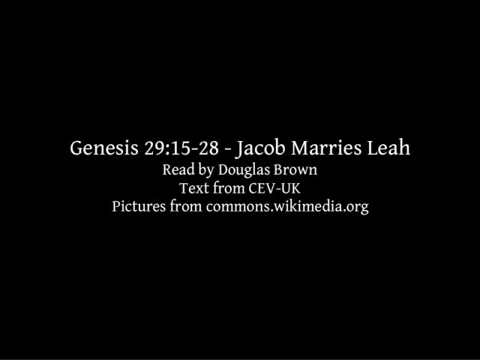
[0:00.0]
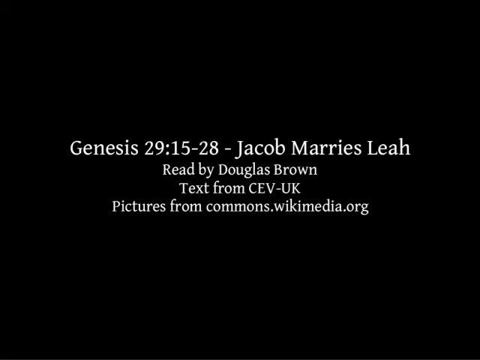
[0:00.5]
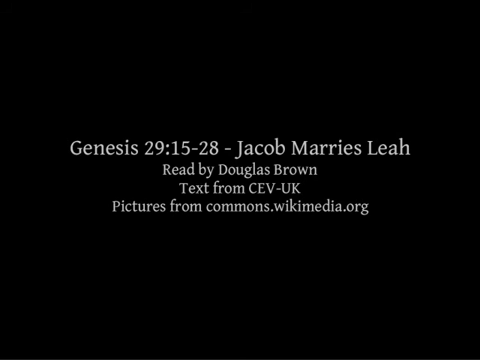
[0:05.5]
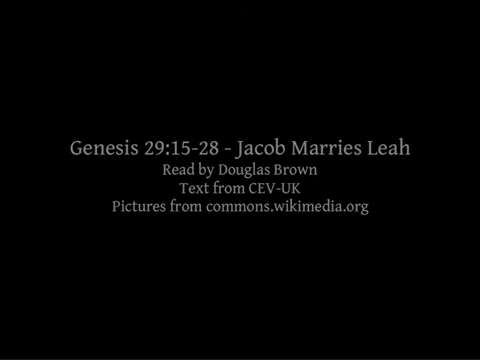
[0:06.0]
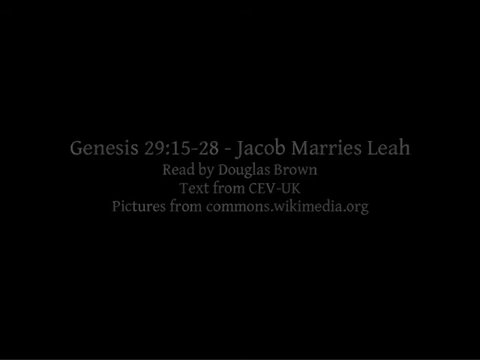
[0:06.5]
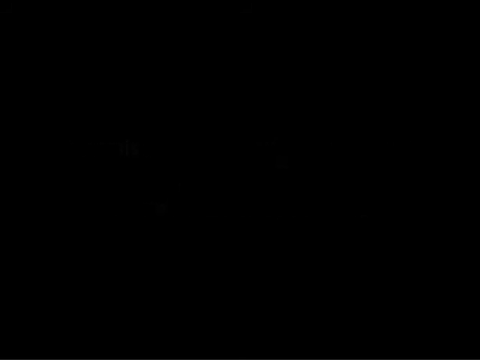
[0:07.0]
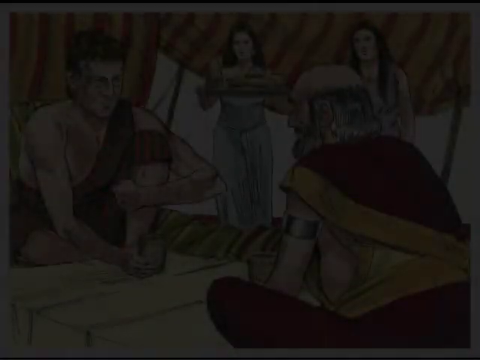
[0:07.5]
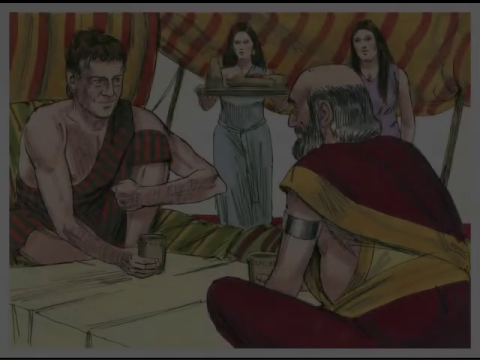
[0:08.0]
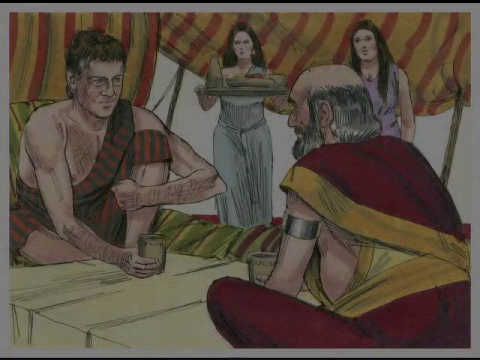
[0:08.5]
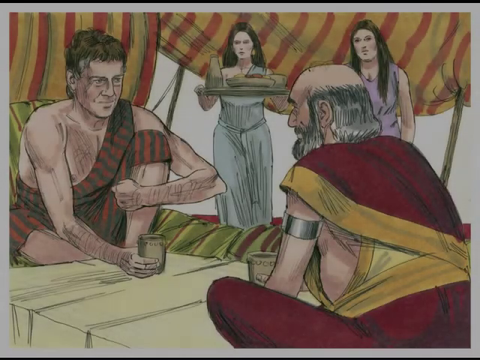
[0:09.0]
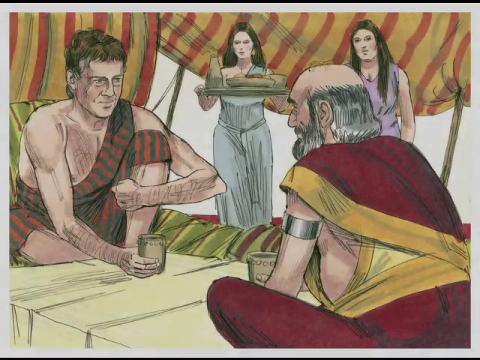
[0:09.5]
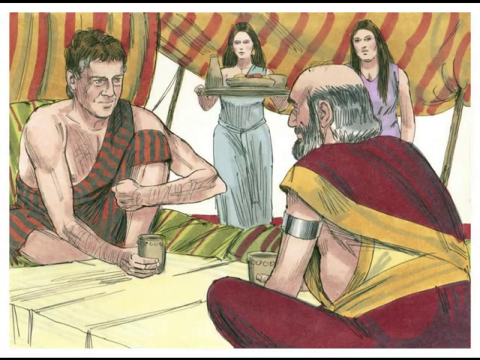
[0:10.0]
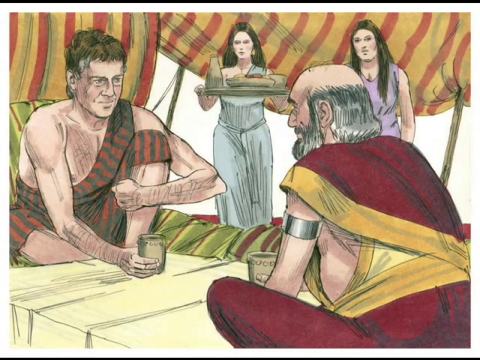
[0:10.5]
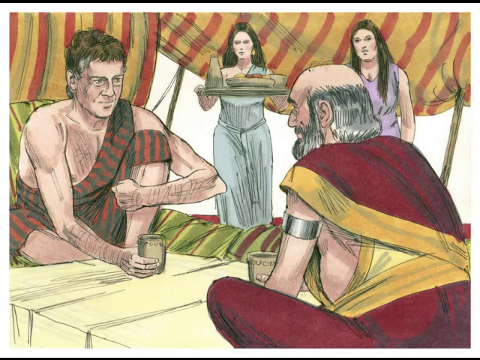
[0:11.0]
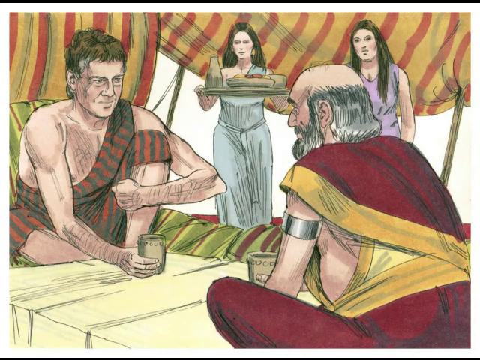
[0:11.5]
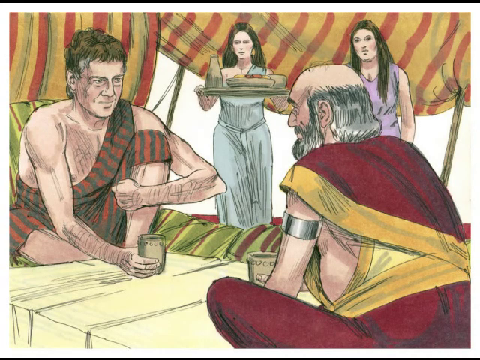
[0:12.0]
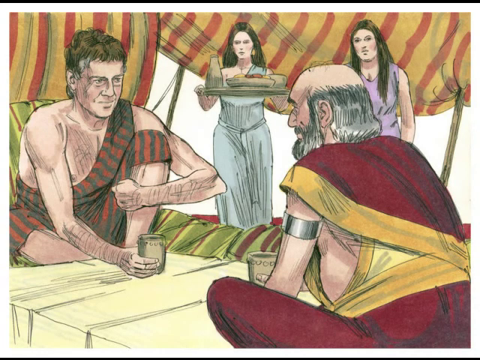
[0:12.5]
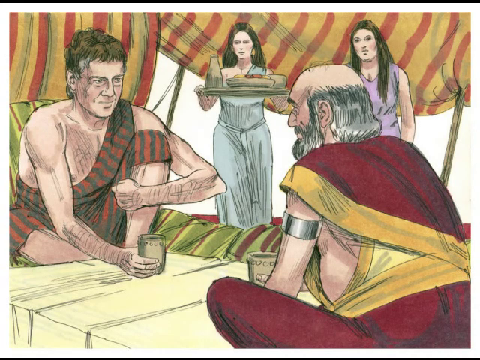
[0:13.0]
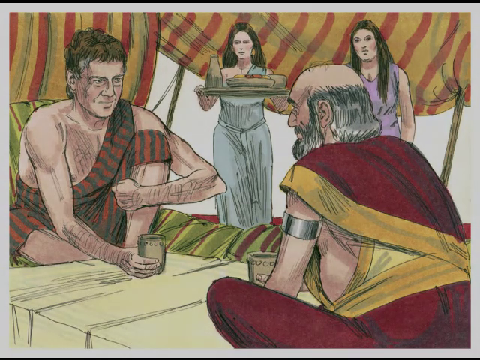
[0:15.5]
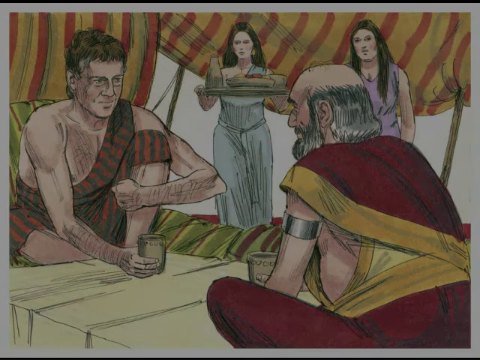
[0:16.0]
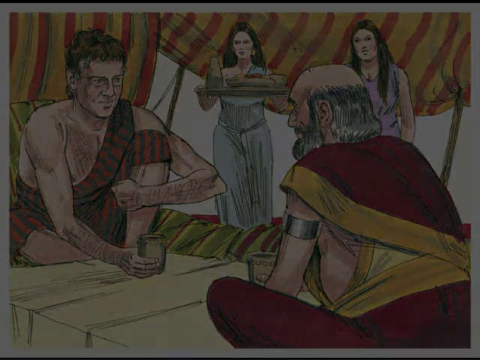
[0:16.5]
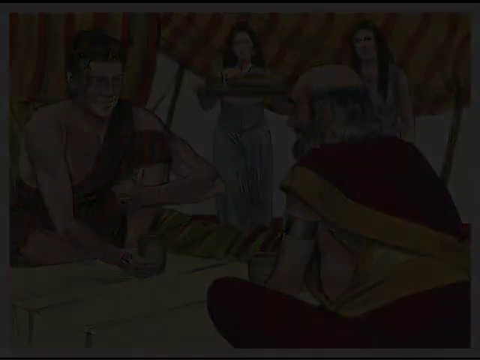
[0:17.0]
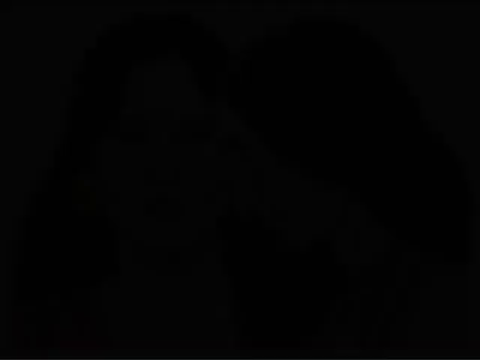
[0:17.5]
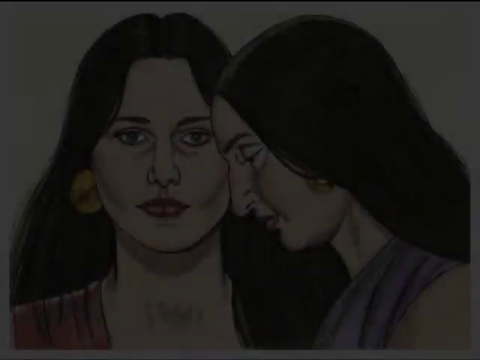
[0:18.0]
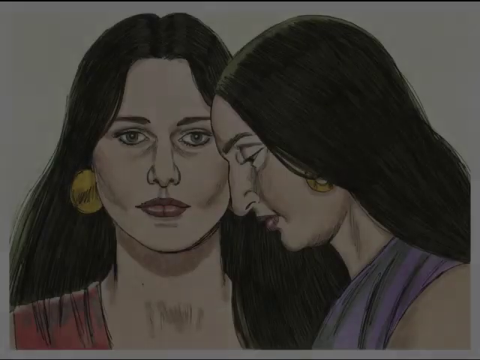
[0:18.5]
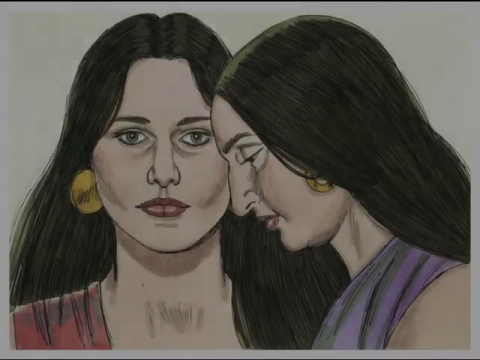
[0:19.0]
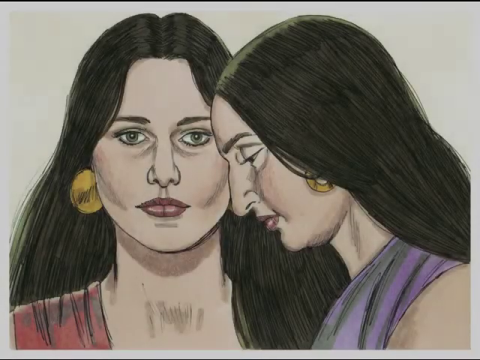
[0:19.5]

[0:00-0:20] The video opens with white text on a black screen that reads "Genesis 29, 15 through 28 - Jacob marries Leah, read by Douglas Brown, text from CEV-UK. Pictures from" followed by a website credit ending in "wikimedia.org". The font is something like Times New Roman, a little fancy but not too fancy. The text fades out, and a color painting or rendering fades in, showing two men sitting facing each other. The man on the left has his back to the viewer; the top of his head is bald, with long straight hair running from about the middle of his head down to his shoulders, and he wears a maroon and gold tunic. Facing the viewer and facing him is a younger man with one knee up and his left arm wrapped around it; his right hand, in front of him, holds a cup of some kind of drink. He apparently wears a maroon robe, has brown hair, and appears to be wearing glasses. They are in a tent with maroon and saffron stripes, and behind them are two women in long sleeveless dresses, one of them carrying a platter filled with food.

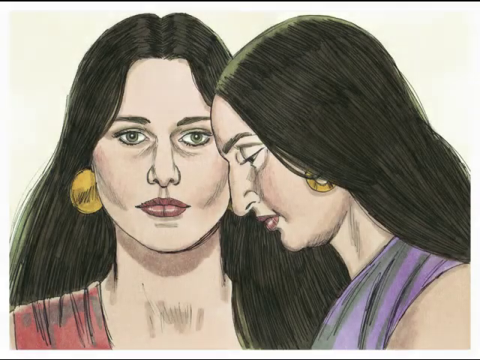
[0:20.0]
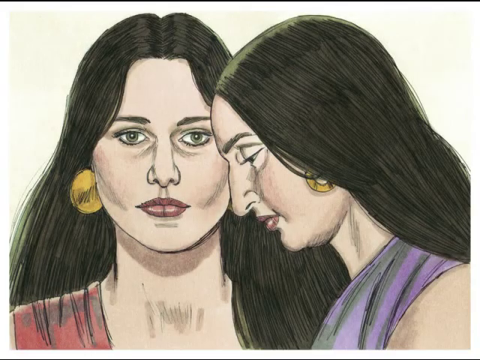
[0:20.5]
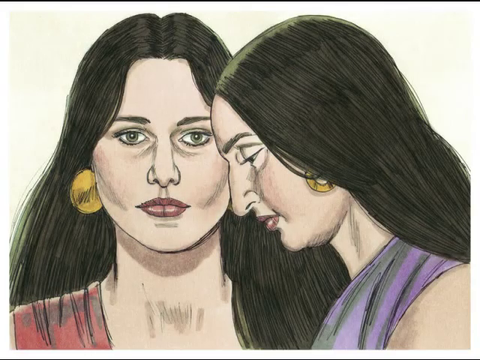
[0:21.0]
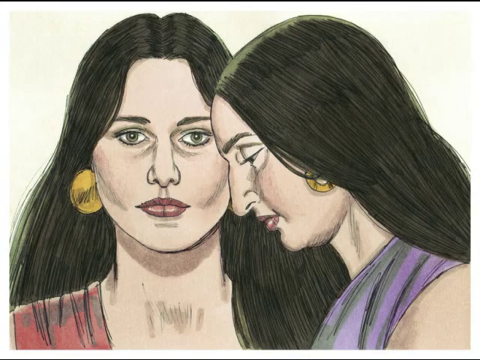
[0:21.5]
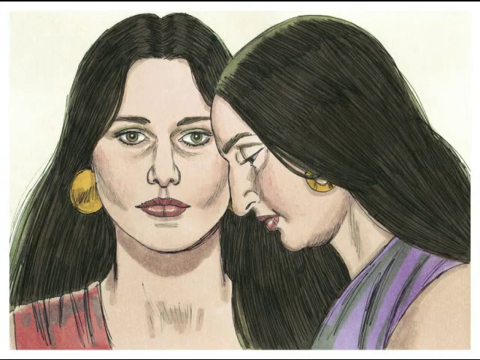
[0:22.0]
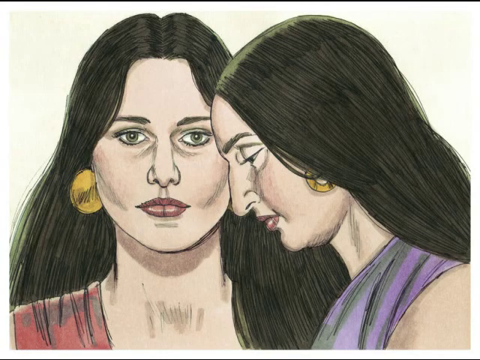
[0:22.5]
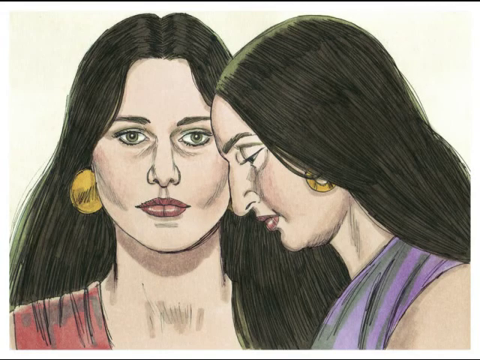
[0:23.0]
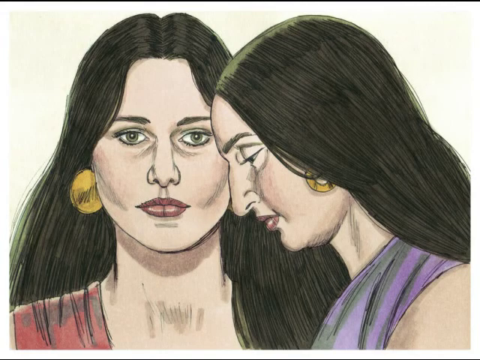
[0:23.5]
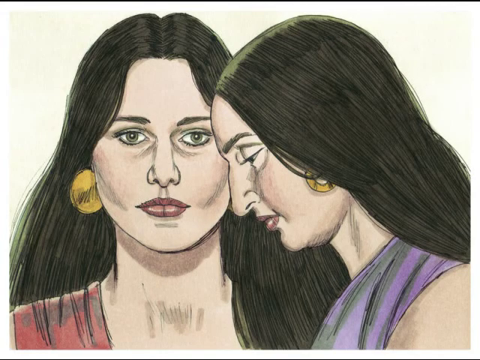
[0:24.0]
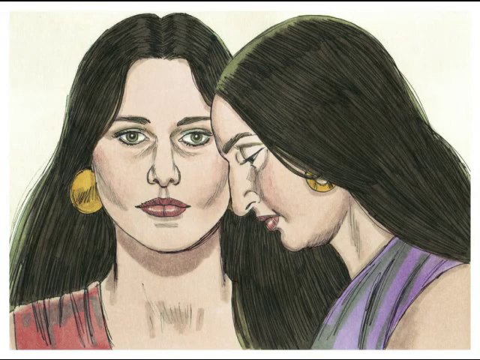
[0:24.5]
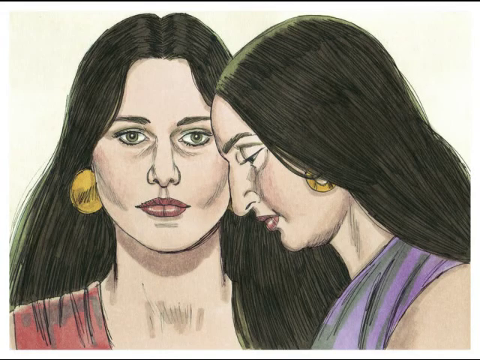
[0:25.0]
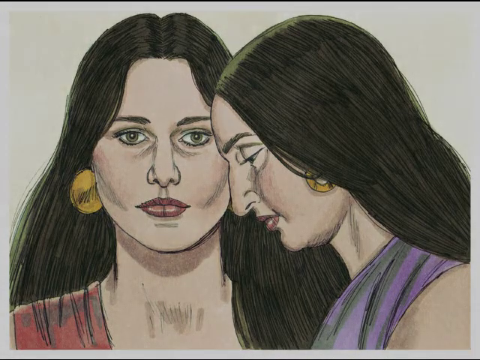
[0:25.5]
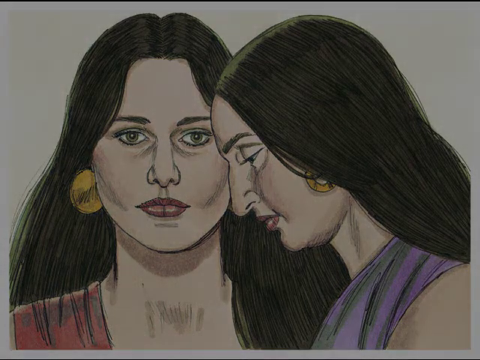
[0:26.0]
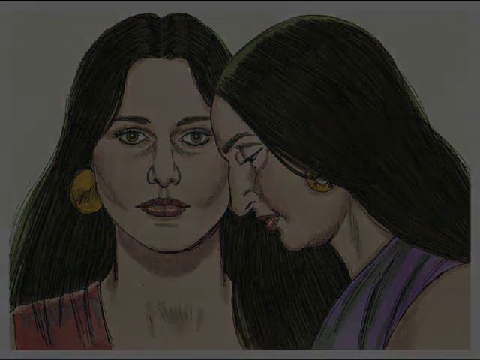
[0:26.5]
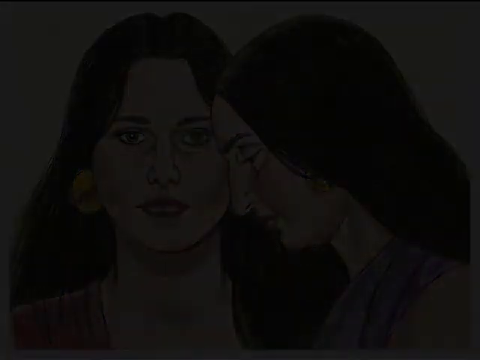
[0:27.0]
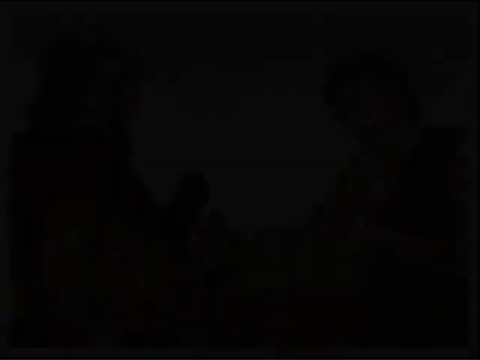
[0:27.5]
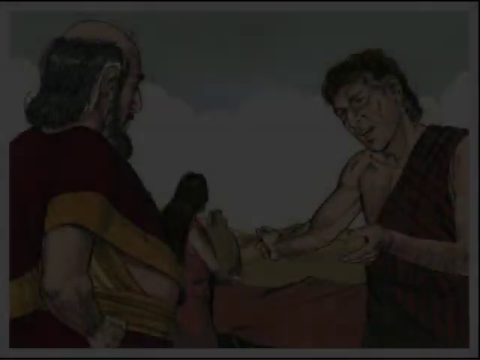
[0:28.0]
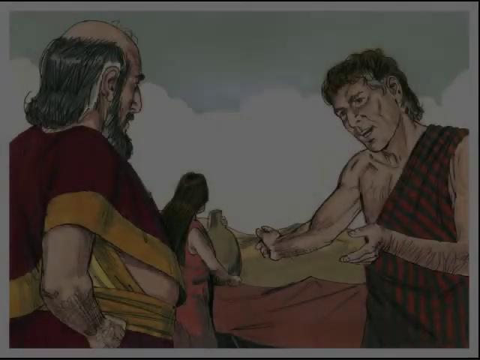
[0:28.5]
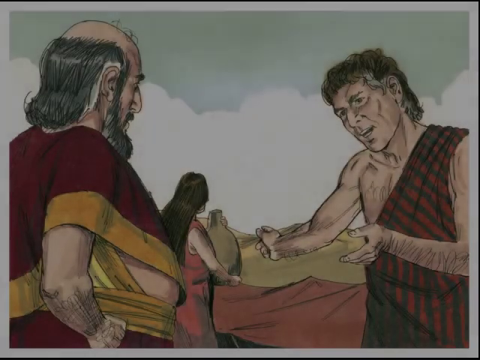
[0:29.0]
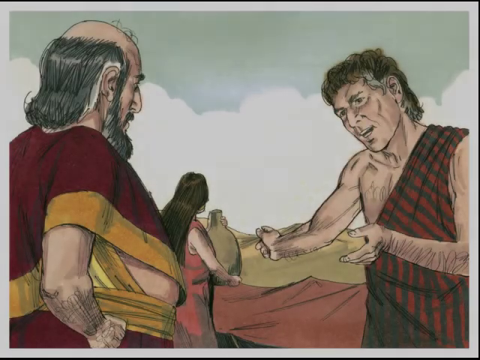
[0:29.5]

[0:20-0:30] A color picture, which looks like a drawing, possibly a pen drawing, rather than a painting, shows two women from the shoulders up. The woman on the left faces forward with a very serious, perhaps pensive expression and very wide eyes. She has long straight dark hair, big gold earrings, and a maroon top with black stripes. The woman on the right is in profile, with only the left side of her face visible, and appears to be leaning her forehead on the temple of the woman on the left. Her eyes are half closed and she looks quite sad. She has a big gold earring in her left ear, long dark straight hair, and a purple top.